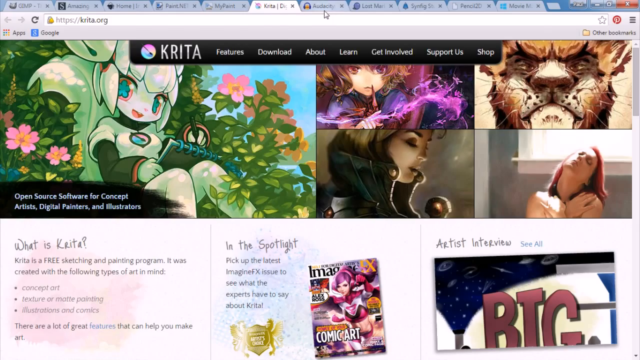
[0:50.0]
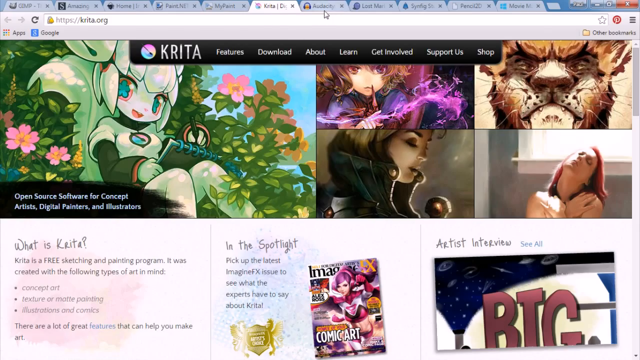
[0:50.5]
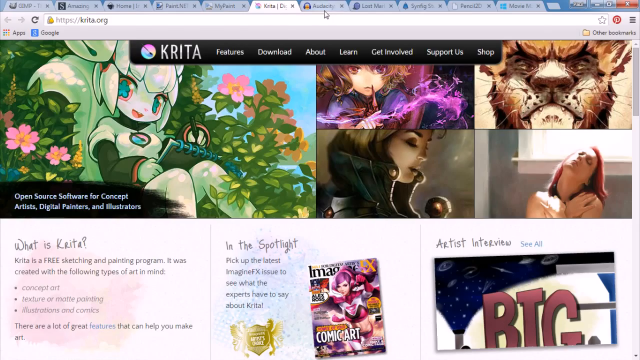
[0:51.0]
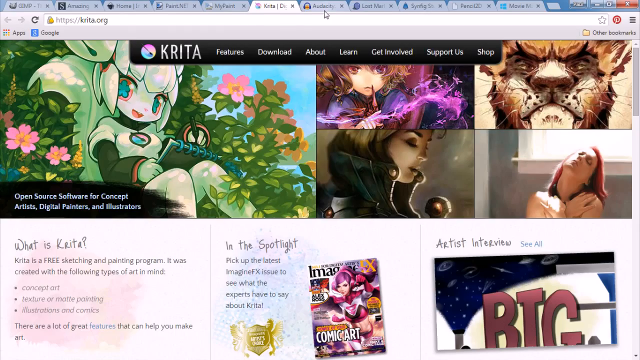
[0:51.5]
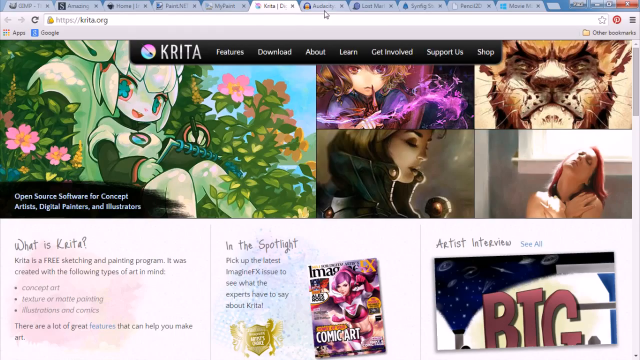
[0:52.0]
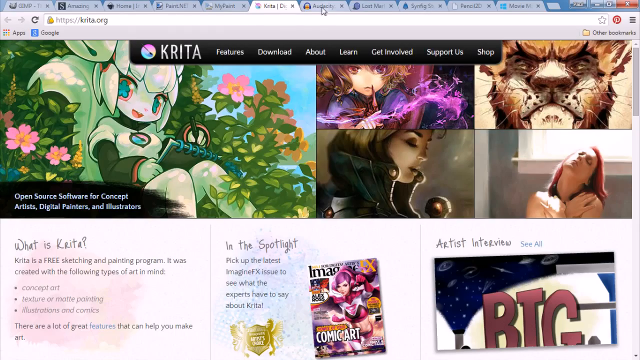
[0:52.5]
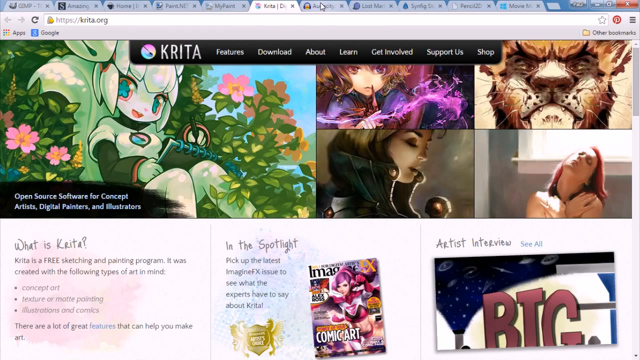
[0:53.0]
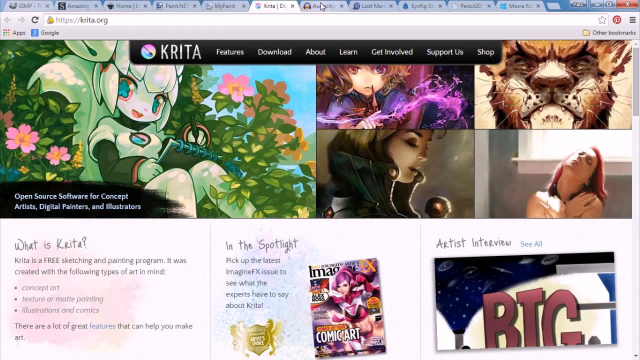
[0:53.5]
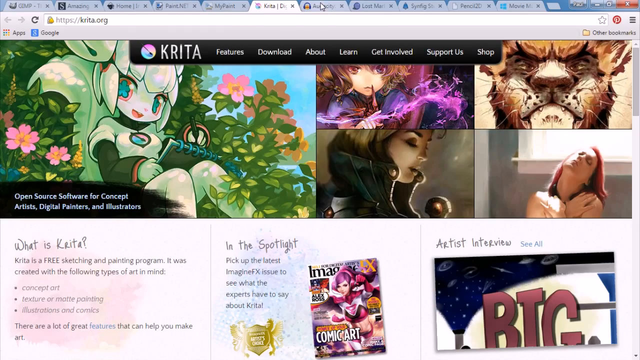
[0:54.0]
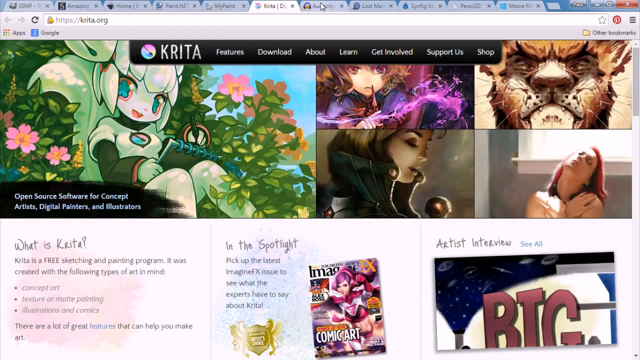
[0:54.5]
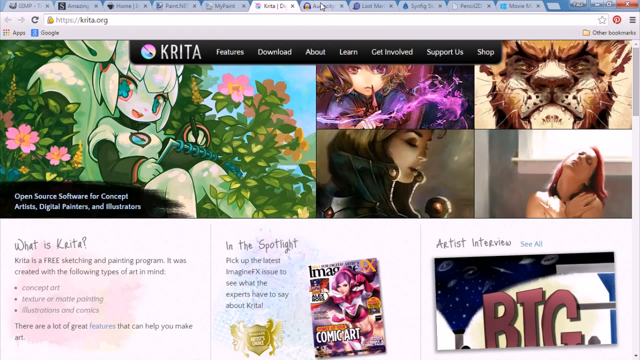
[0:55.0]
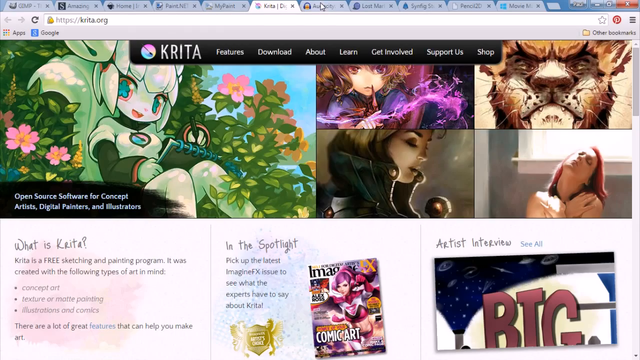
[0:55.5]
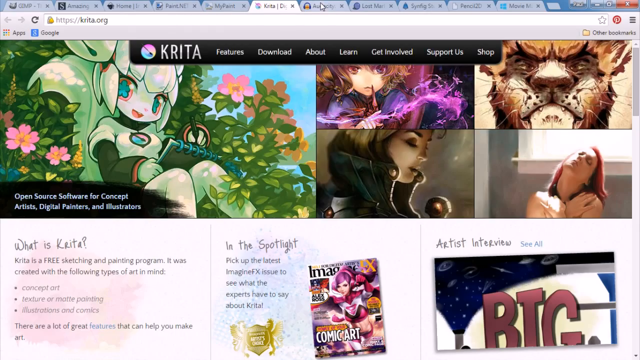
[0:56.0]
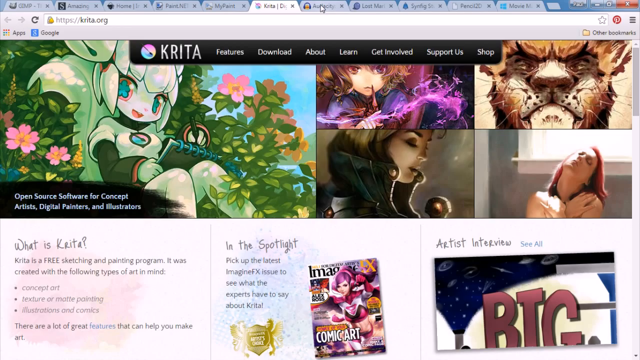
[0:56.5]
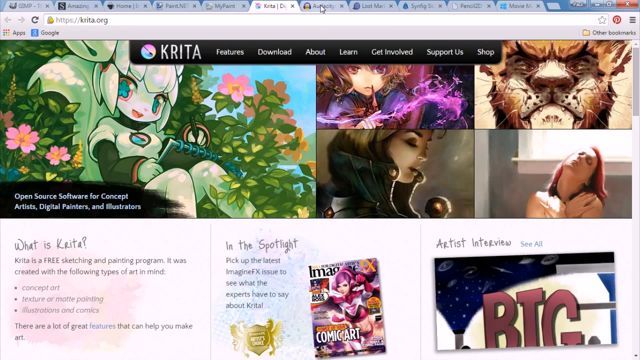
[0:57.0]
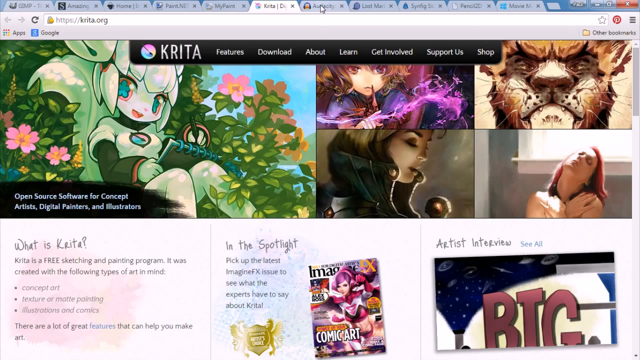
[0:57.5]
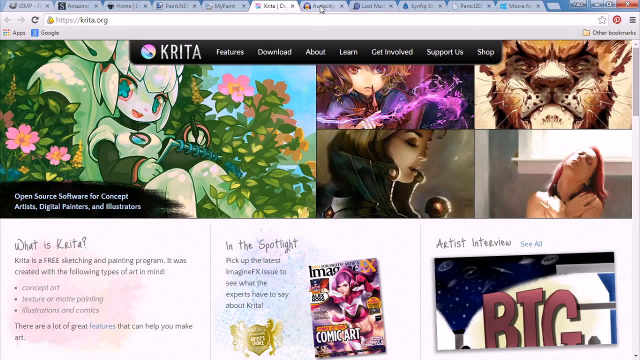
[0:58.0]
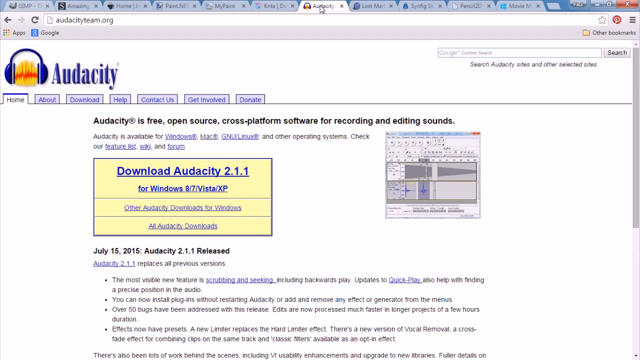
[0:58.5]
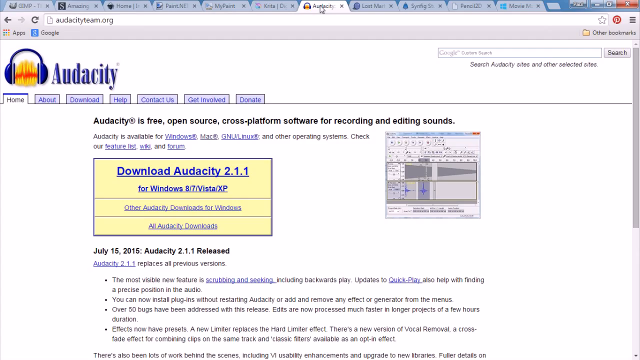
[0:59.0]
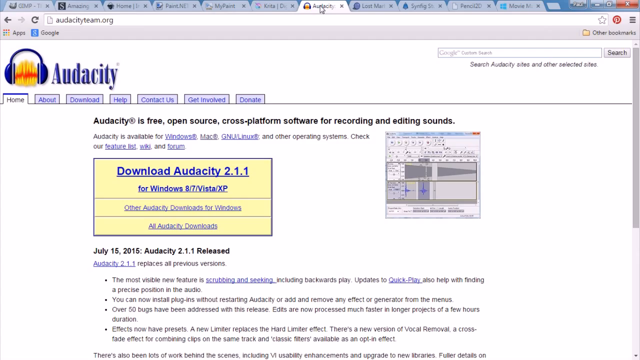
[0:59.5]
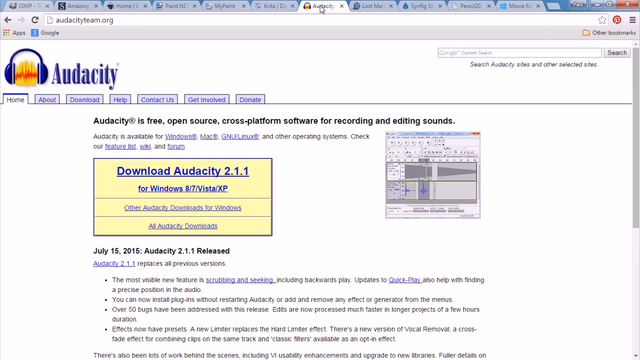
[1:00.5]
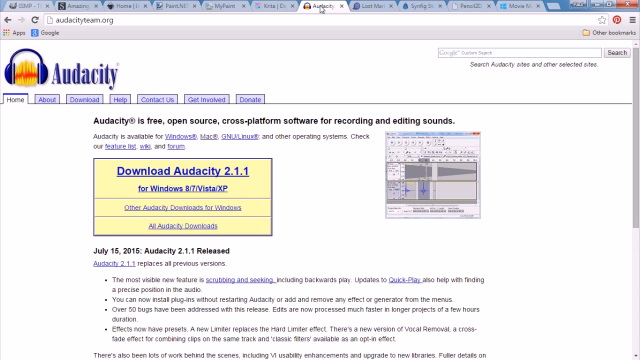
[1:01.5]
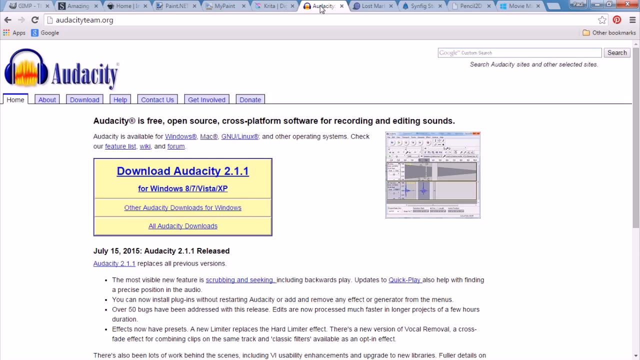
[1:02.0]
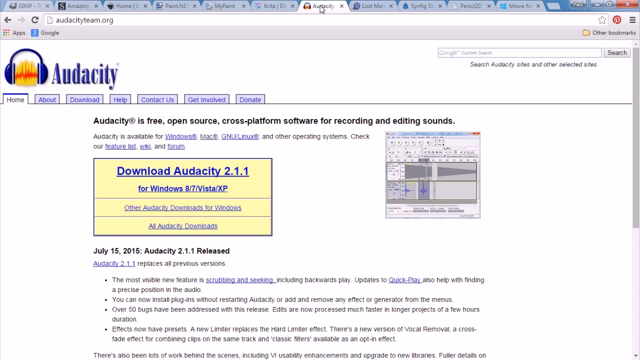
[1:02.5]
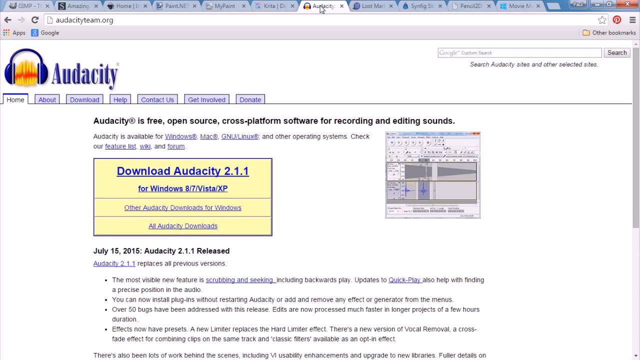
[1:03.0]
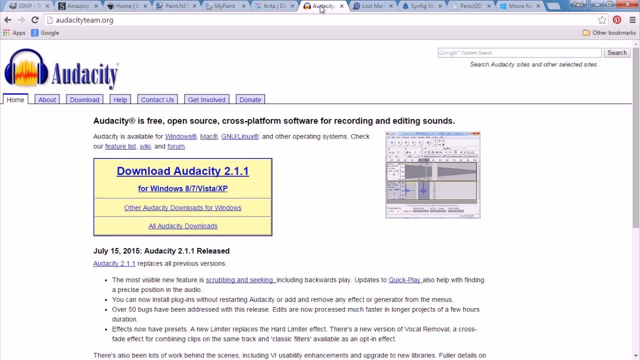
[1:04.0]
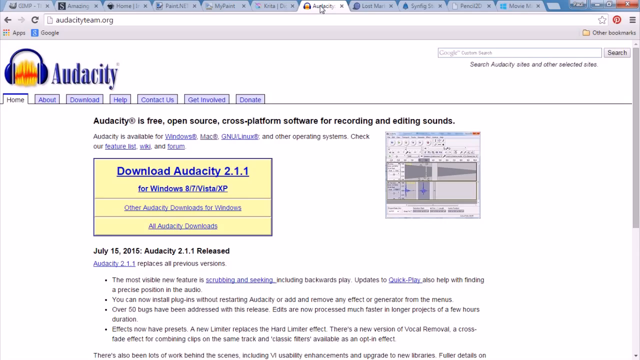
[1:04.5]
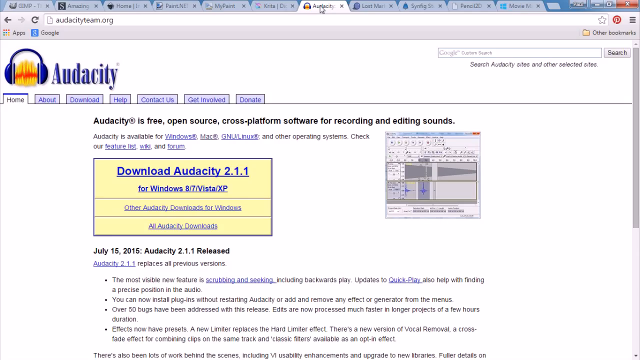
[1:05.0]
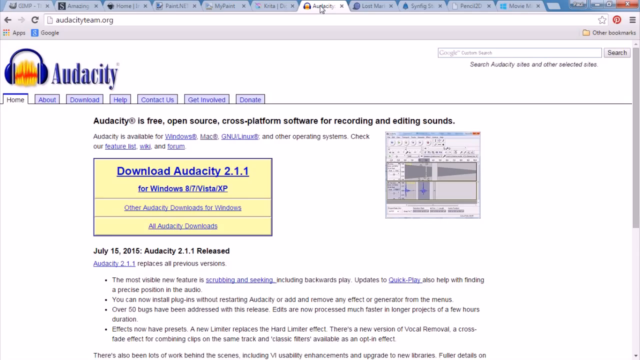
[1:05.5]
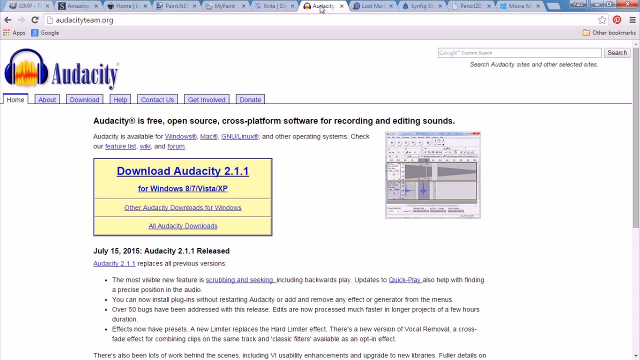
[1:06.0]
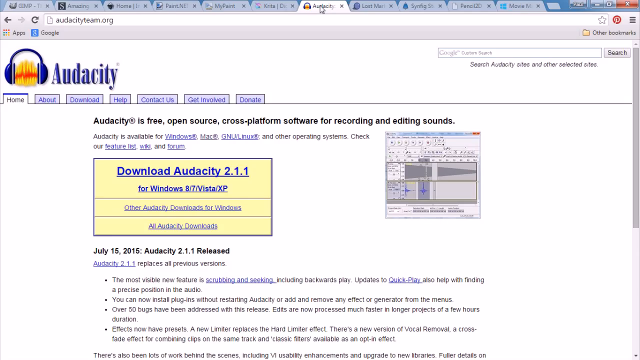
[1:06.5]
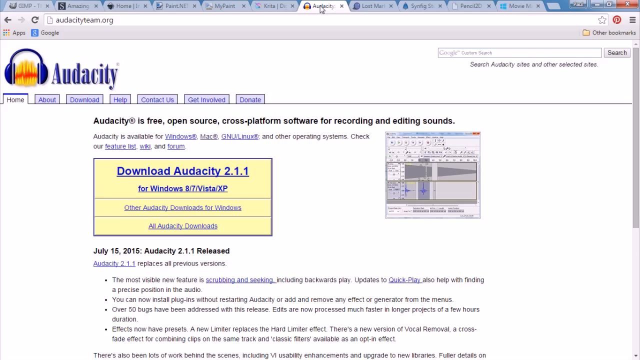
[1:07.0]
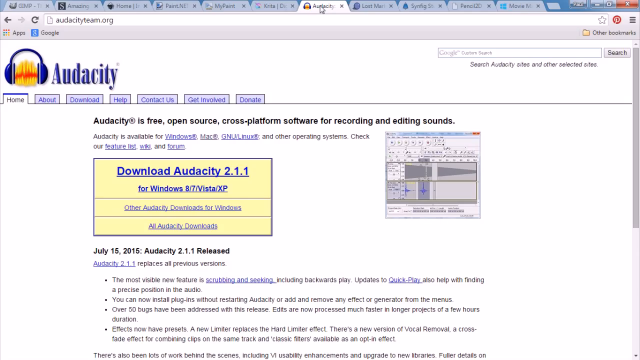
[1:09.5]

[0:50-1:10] The krita.org tab is open, and the page looks animated. In the bottom left corner it reads "What is Krita?" followed by "it is a free sketching and painting program. It was created with the following types of art in mind," then "concept art." The words after that are too small to read. The page stays up for a few moments before the next tab, Audacity, opens. Black text there reads "Audacity is a free open source cross-platform software for recording and editing sounds," along with "download the 2.1.1 version" and "for Windows 8/7/Vista/XP." There appears to be an update dated July 15, 2015.